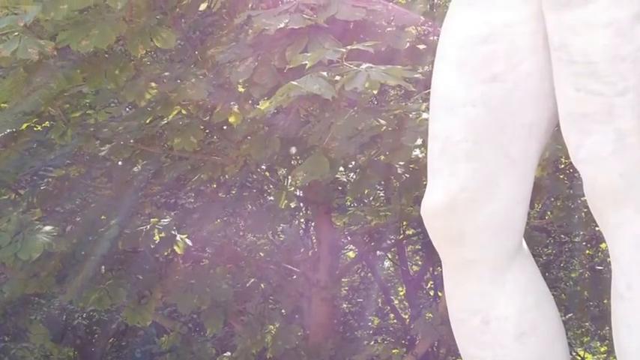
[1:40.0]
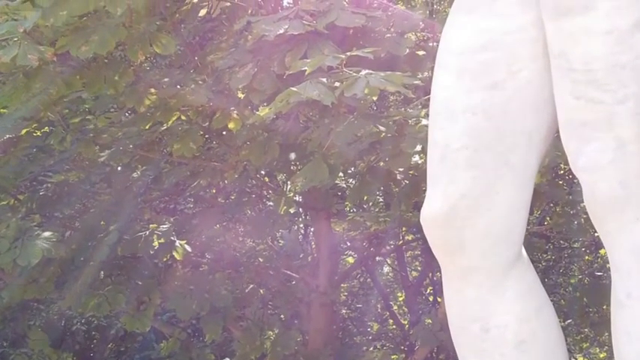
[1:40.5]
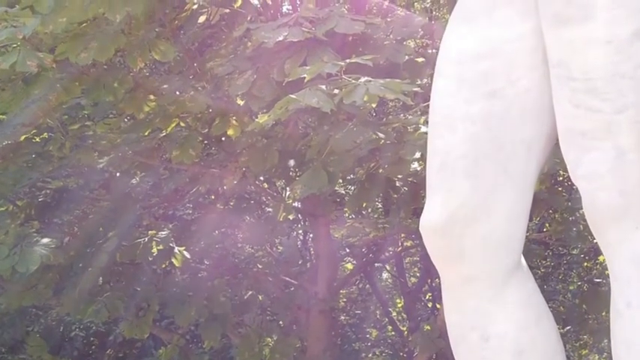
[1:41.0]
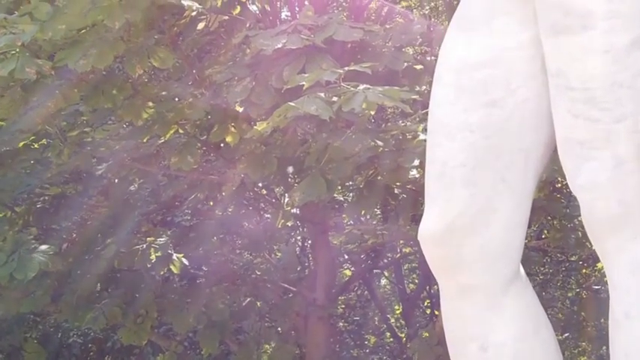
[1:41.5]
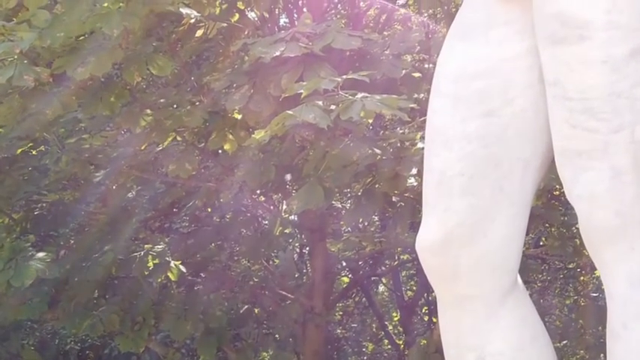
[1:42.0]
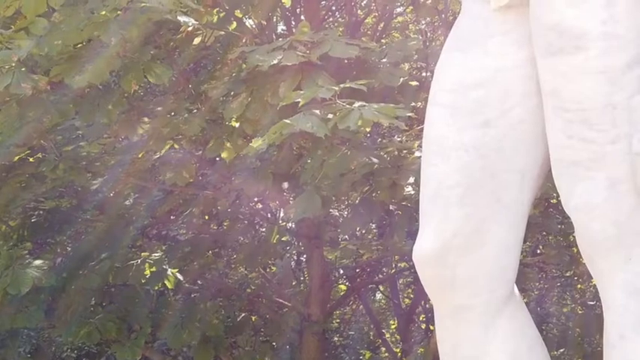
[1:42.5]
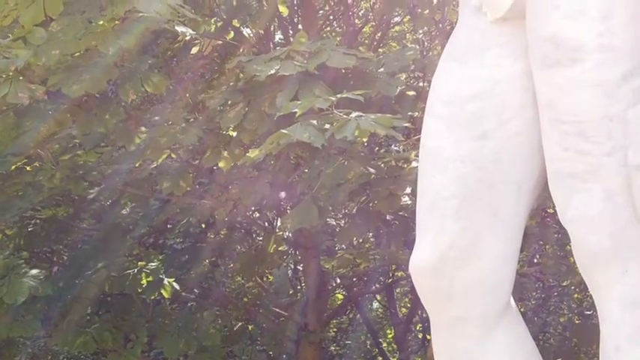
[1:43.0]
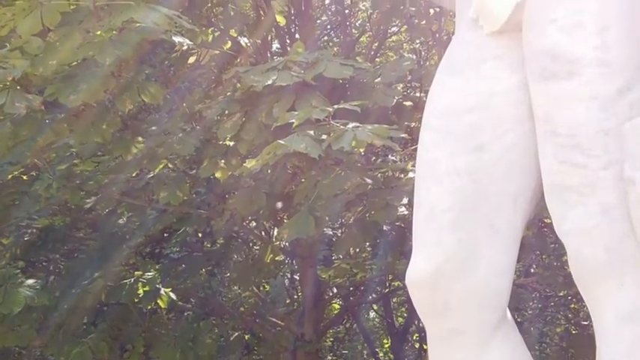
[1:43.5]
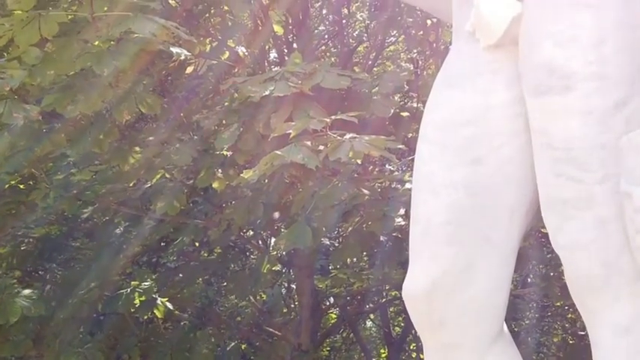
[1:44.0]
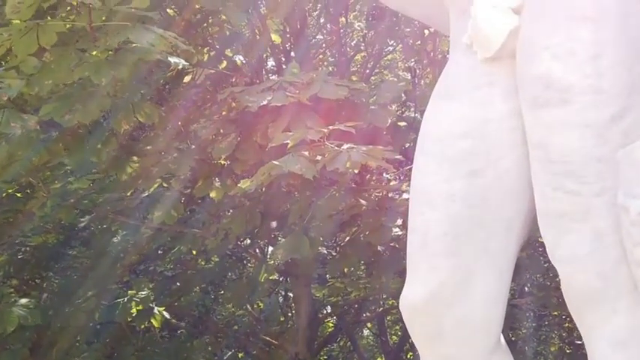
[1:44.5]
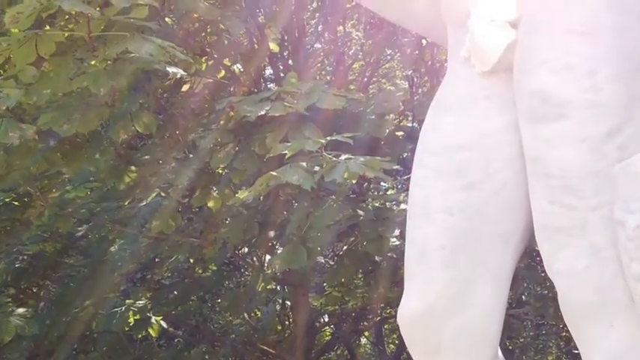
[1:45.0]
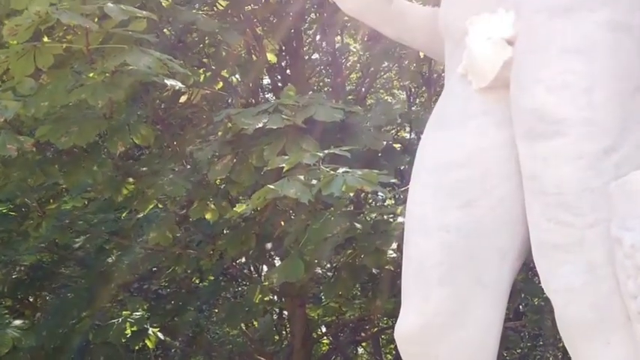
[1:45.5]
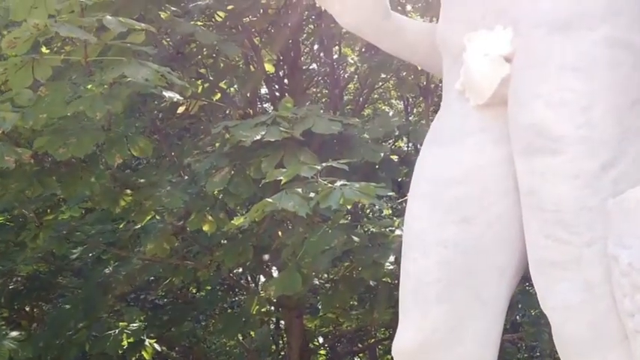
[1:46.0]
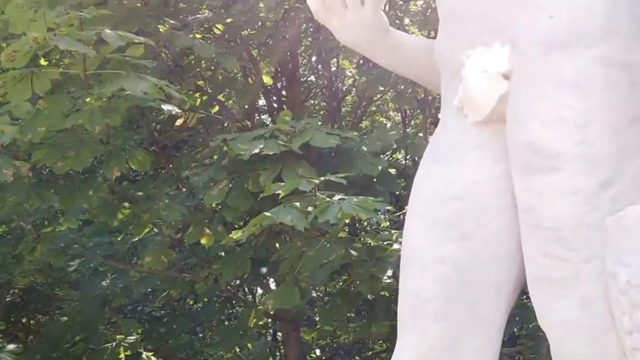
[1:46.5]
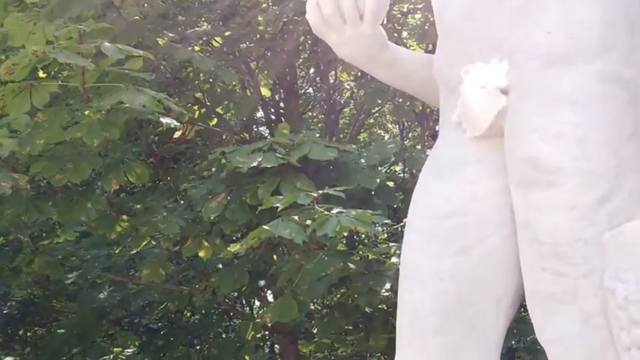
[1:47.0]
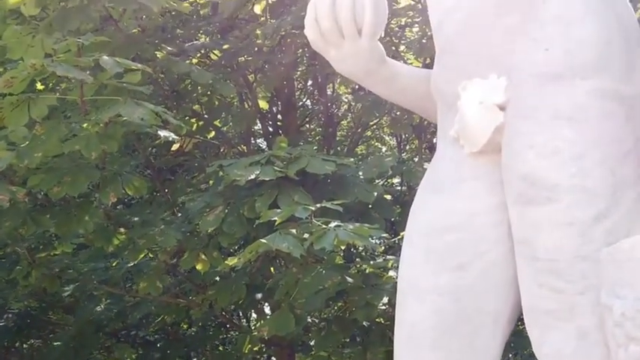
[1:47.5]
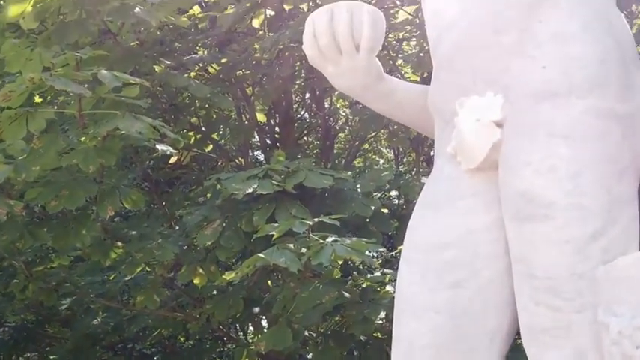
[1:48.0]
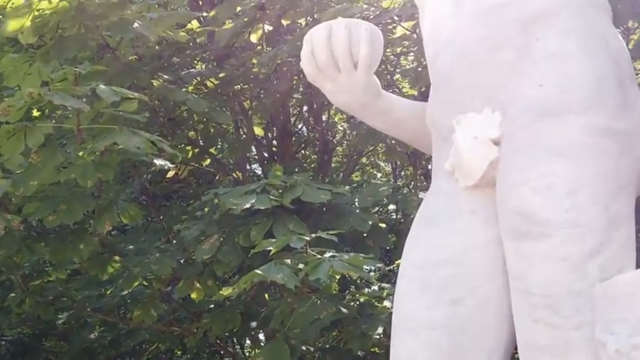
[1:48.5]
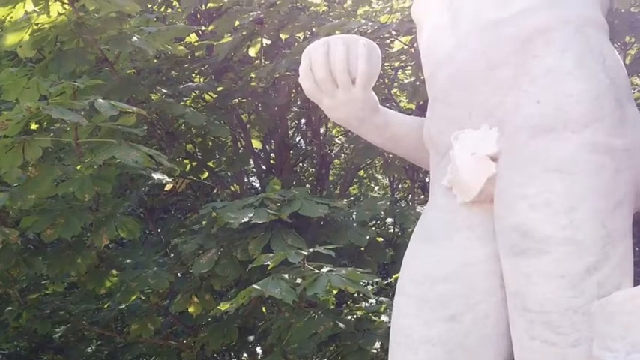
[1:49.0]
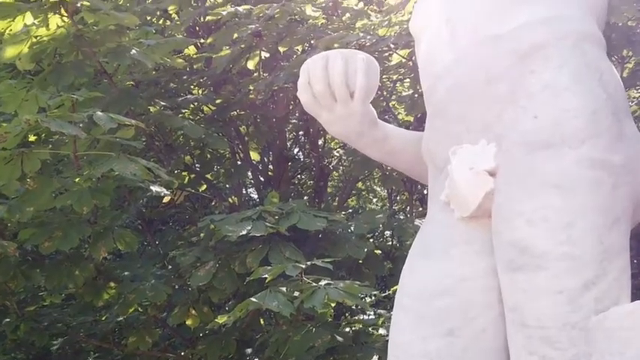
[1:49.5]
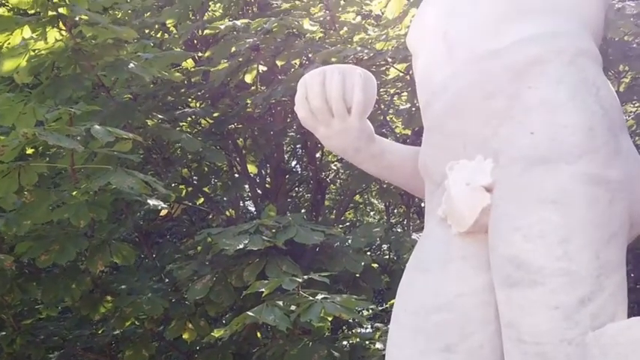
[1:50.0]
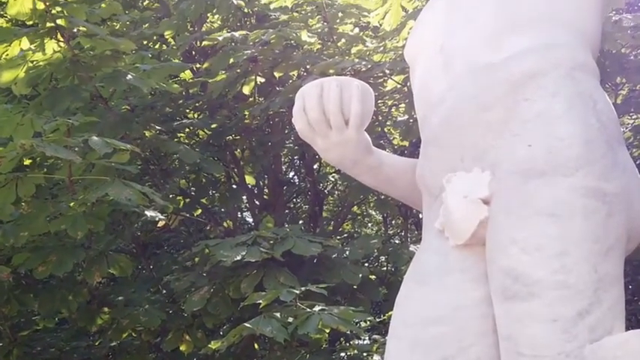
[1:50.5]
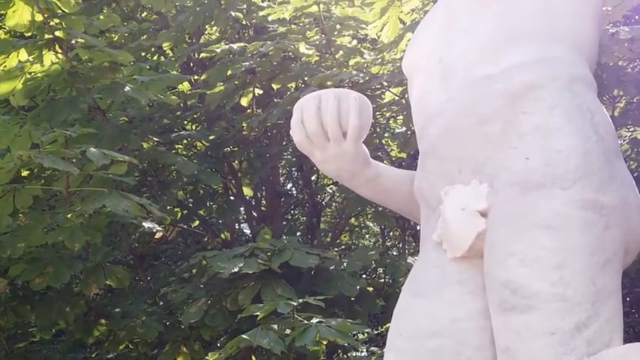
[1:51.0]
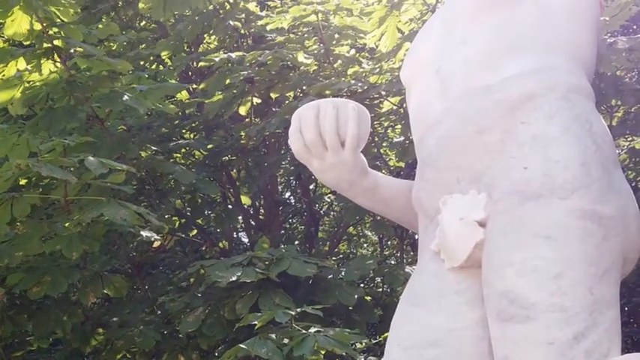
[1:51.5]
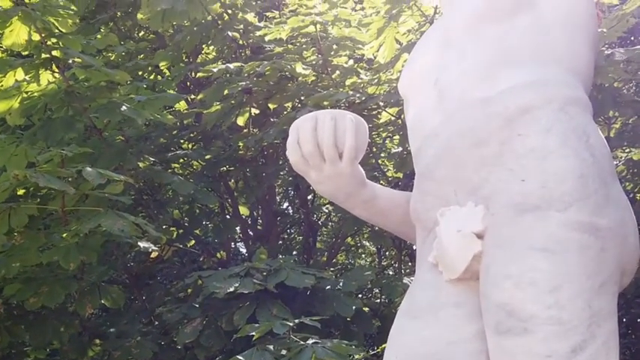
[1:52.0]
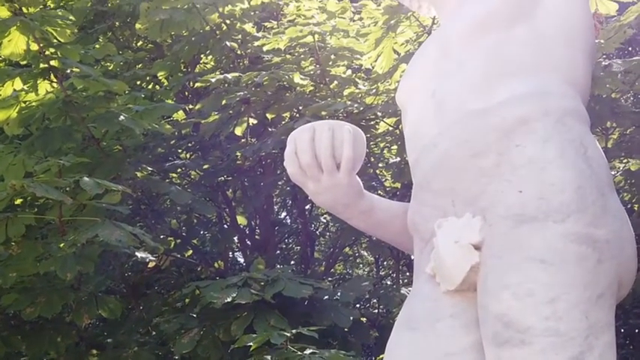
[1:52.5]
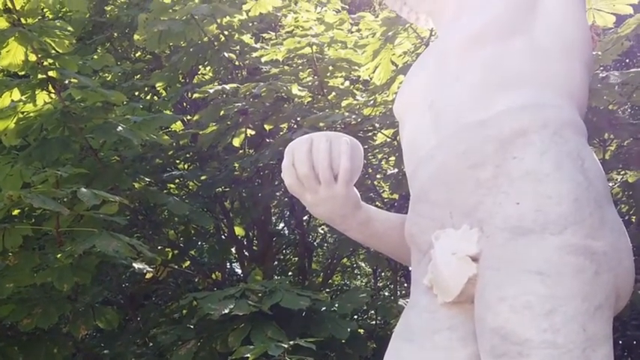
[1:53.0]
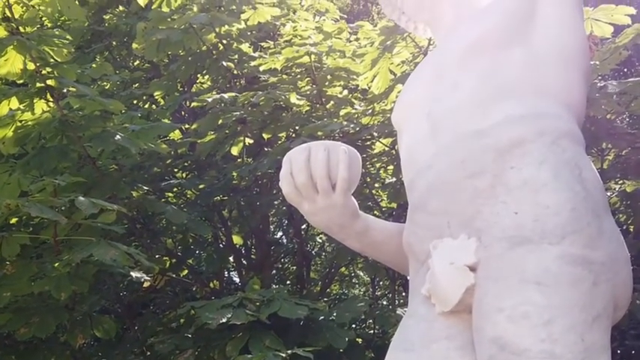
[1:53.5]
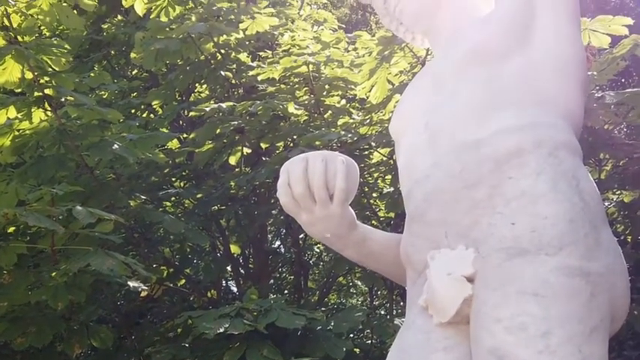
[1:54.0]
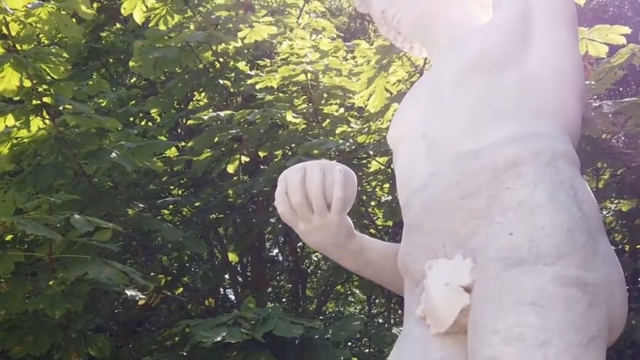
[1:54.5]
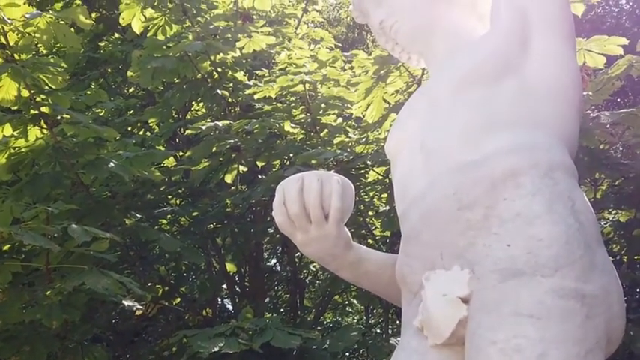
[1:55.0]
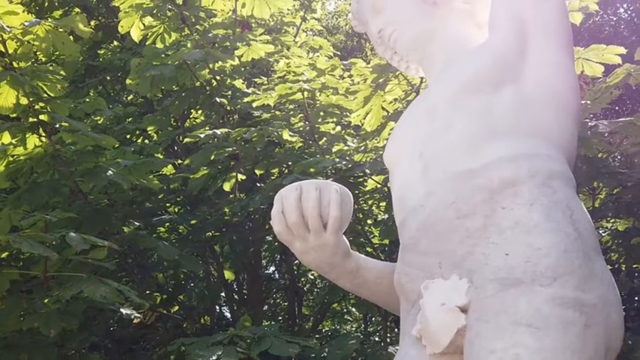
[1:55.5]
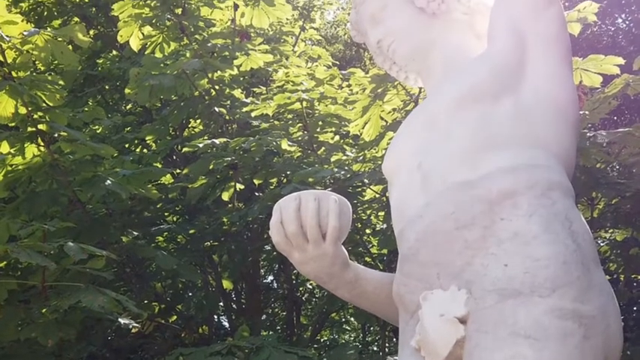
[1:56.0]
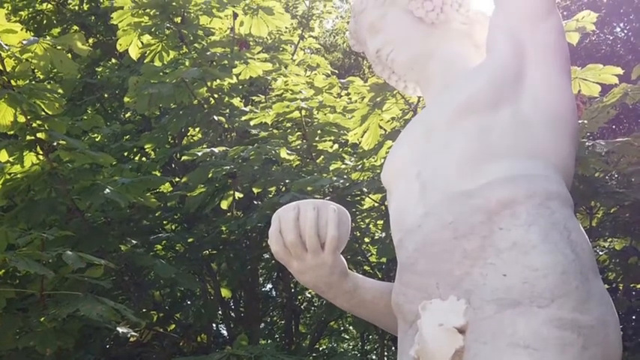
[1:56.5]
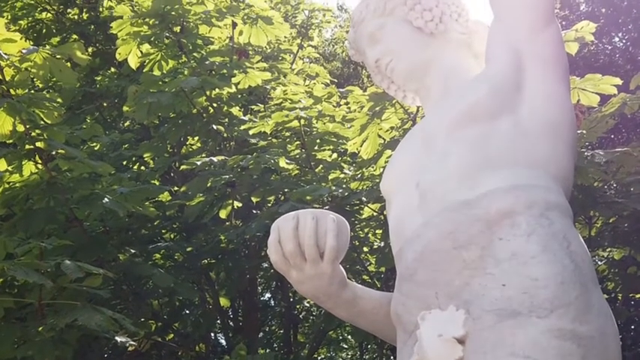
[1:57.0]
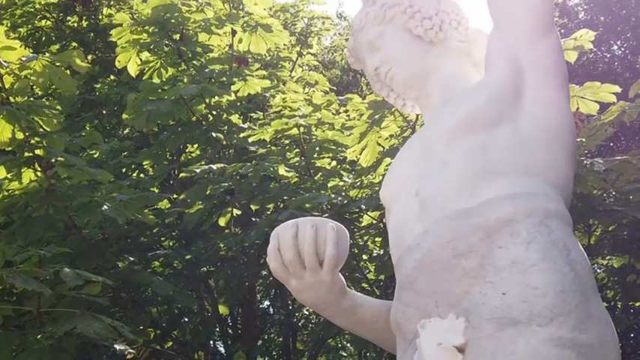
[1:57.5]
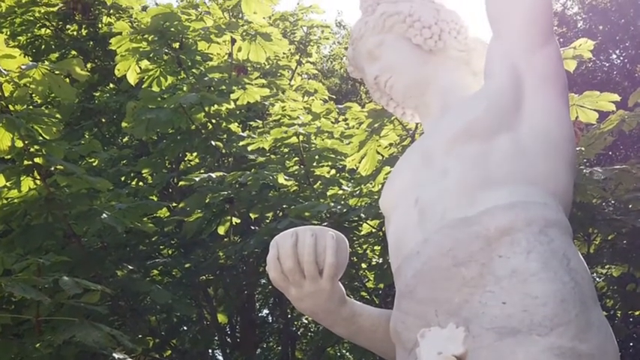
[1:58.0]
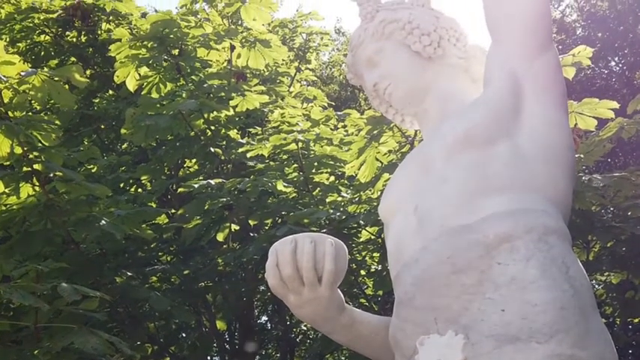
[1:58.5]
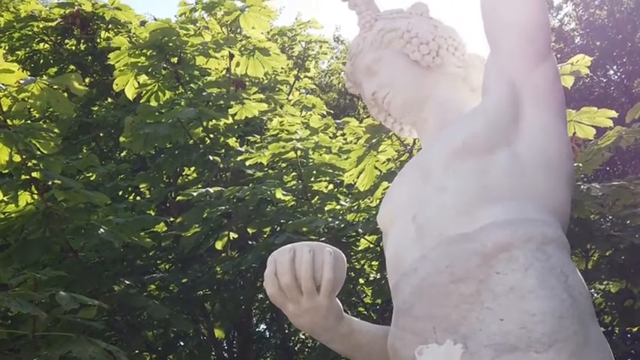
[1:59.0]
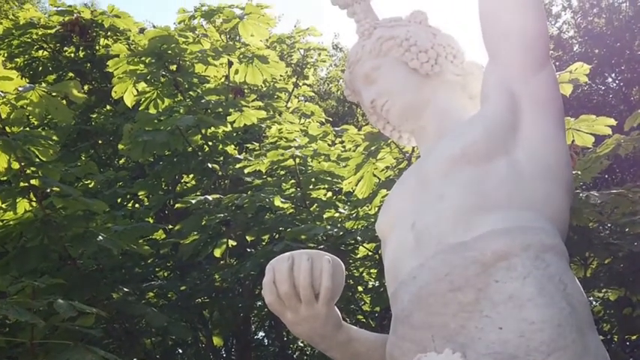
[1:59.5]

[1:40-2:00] The camera pans from the legs of a white marble statue of a muscular man with curly hair, completely naked except for a grape leaf covering his genitals. His right hand holds a bowl that is open to the sky, and his other hand is outstretched and up, holding what appears to be grapes, which dangle and touch the top of his head. The statue stands in a lush green garden setting, with beams of sunshine coming through the trees and foliage as the camera slowly pans upwards from the knees to the top of the statue's head. The figure is likely the god of wine, Dionysus.